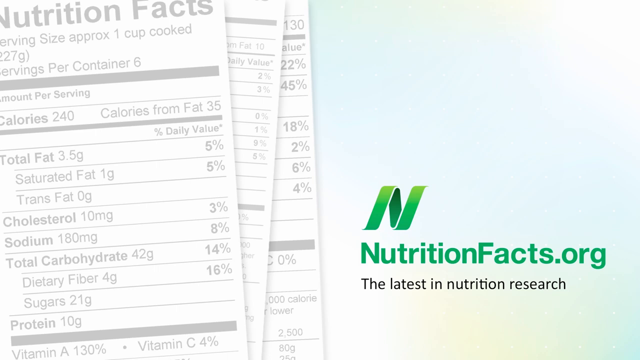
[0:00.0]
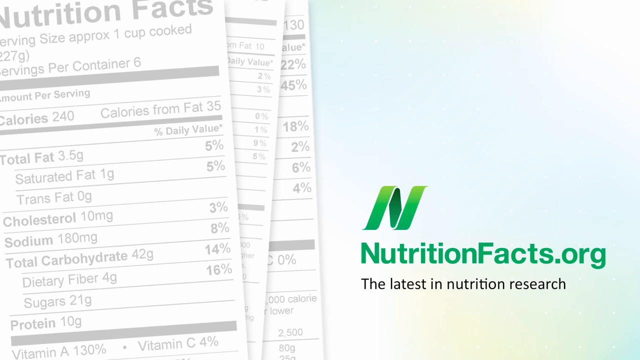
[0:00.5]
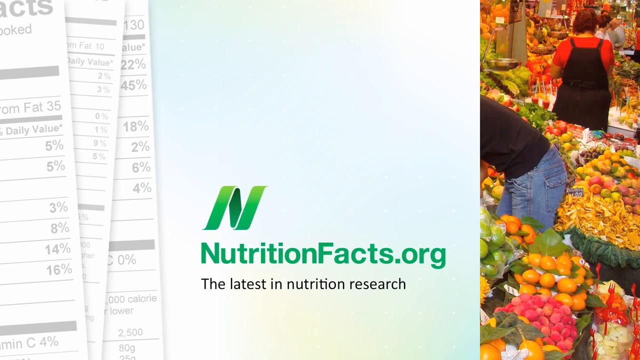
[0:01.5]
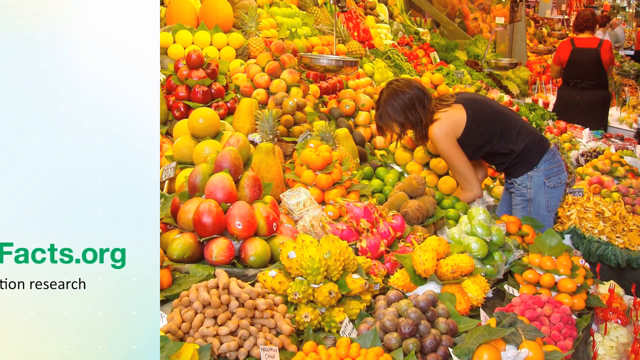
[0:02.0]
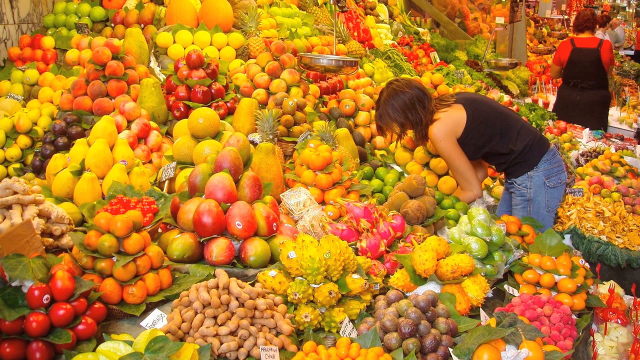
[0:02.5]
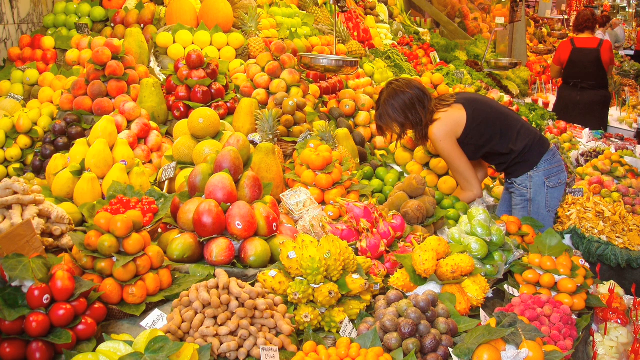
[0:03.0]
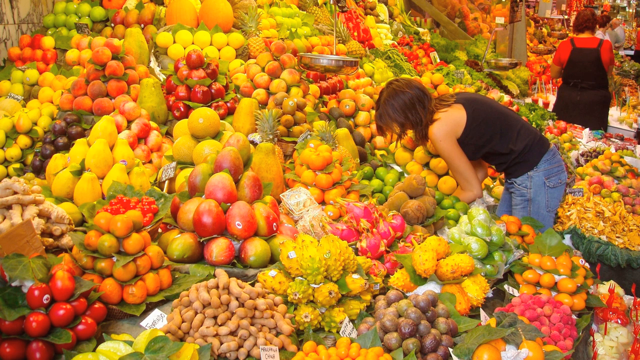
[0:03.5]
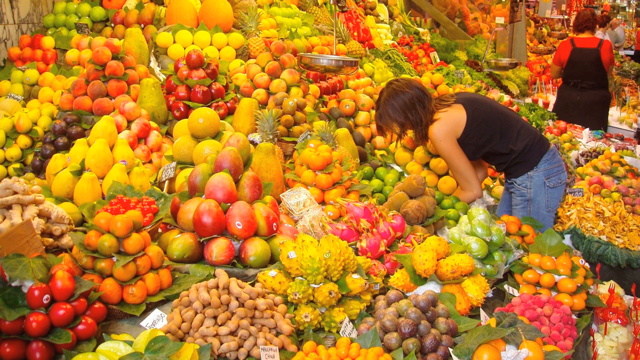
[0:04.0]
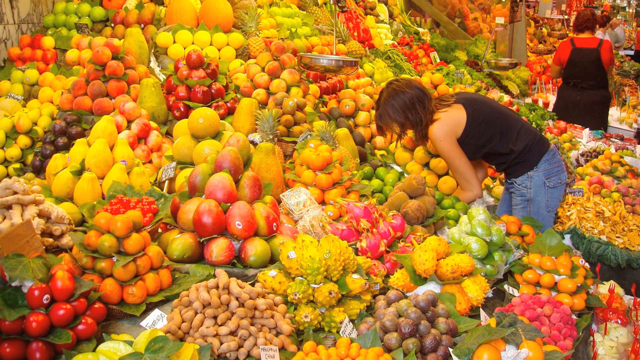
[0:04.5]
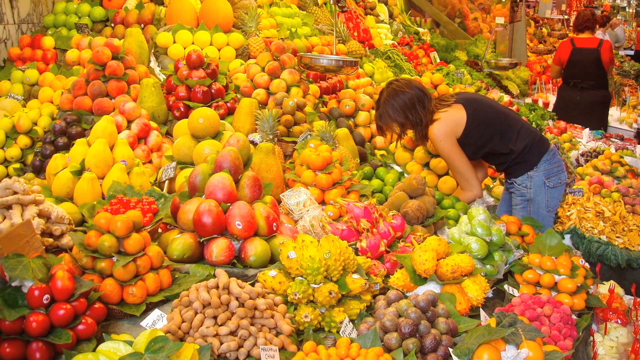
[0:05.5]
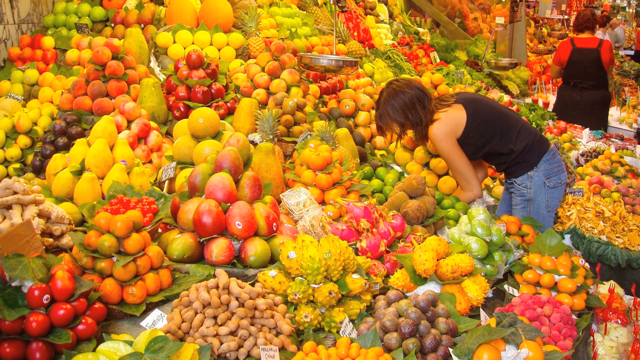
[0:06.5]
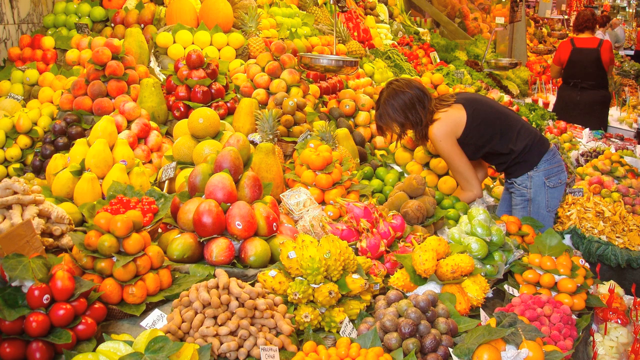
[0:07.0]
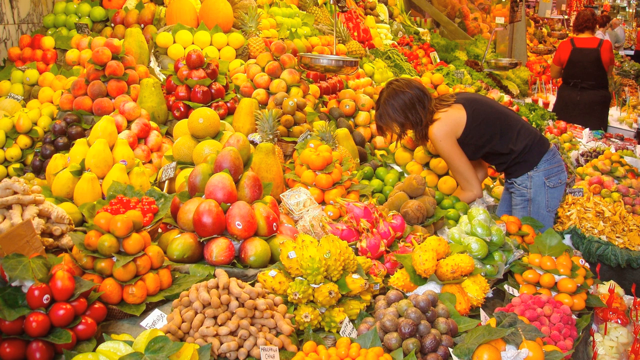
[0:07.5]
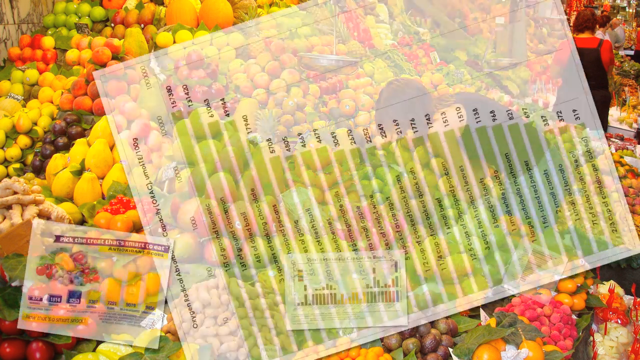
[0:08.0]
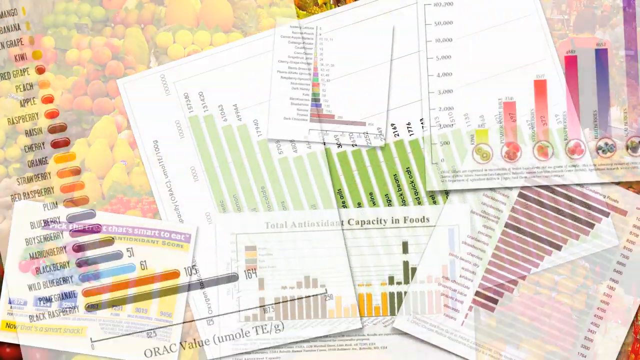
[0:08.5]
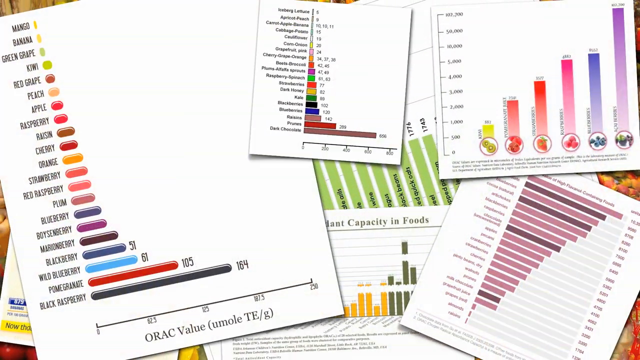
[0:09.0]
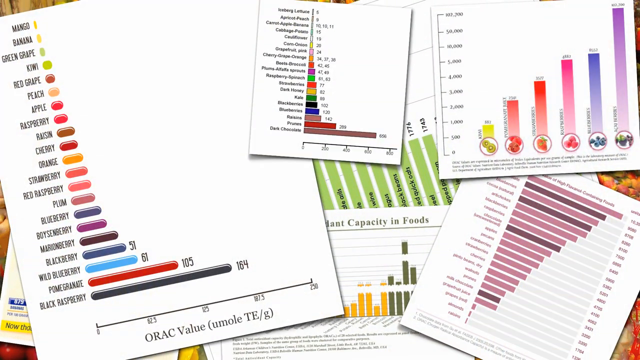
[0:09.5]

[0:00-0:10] The video presents information on nutrition facts, with the website nutritionfacts.org. A woman is in the fruit and vegetable section of a store; she appears to be holding a whole armful of round oranges and is leaning over. The oranges look like they may be about to fall on the floor, and she is trying to avoid that. Nutrition facts appear on the left side of the screen and the website information on the right-hand side. Many nutritional pamphlets appear, most of them with multicolored scales and graphs. Another woman is also shopping in the store; her back is to the camera, and she wears either overalls or a jumper with straps over her shoulders, along with a red shirt. The fruit is piled very high, stacked from about somebody's mid-thigh to almost the ceiling. It looks as if pulling one fruit would bring many of them down, which may be what happened to the girl in jeans and a black shirt.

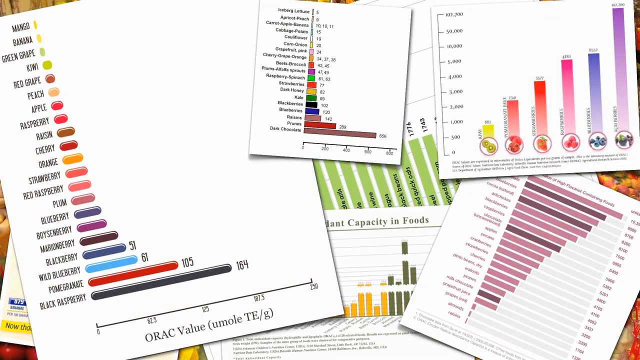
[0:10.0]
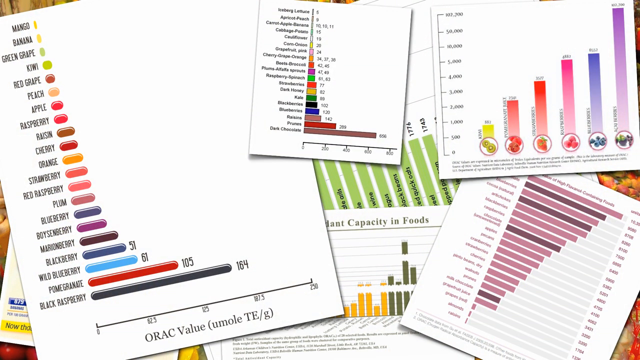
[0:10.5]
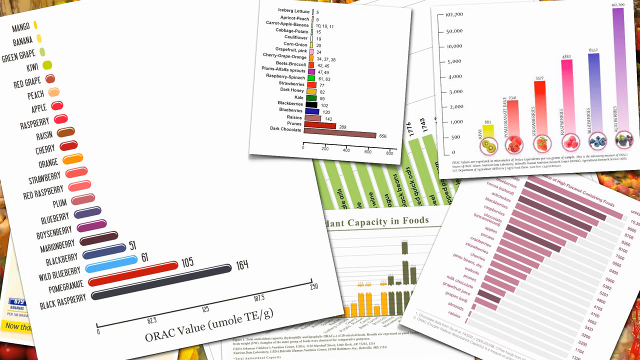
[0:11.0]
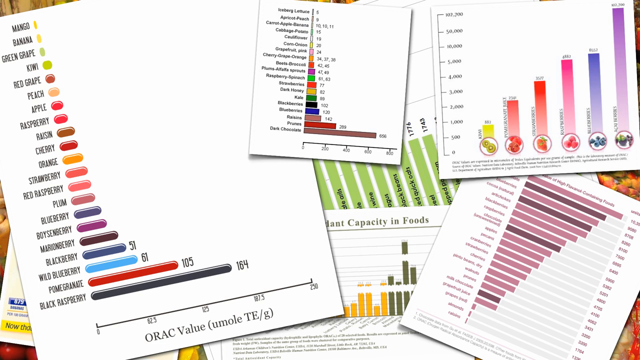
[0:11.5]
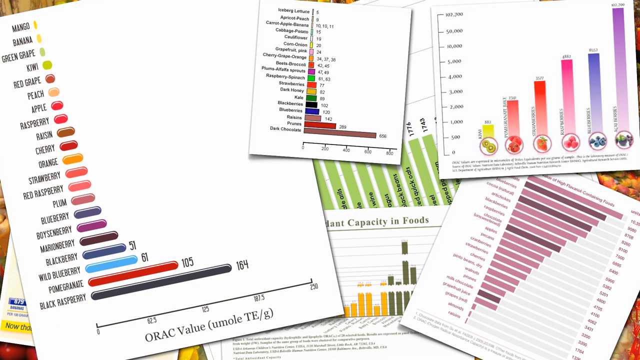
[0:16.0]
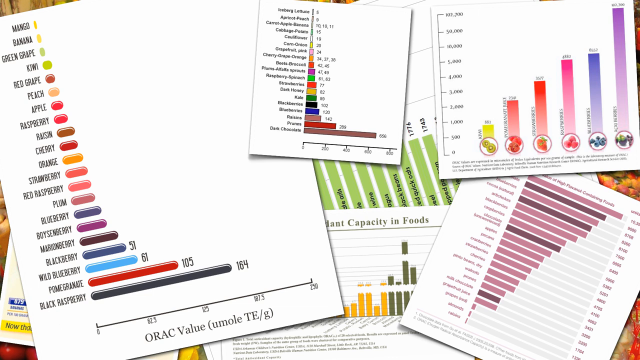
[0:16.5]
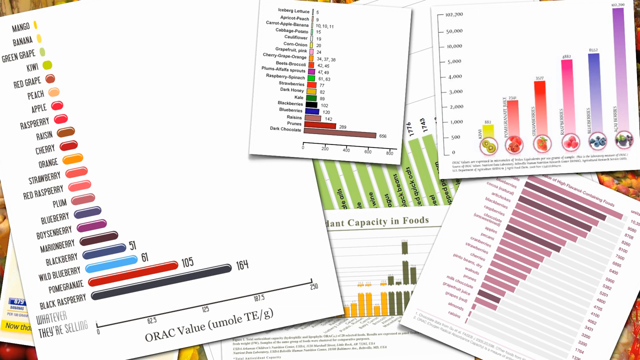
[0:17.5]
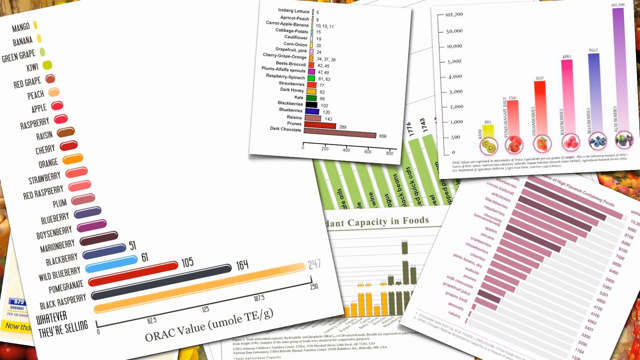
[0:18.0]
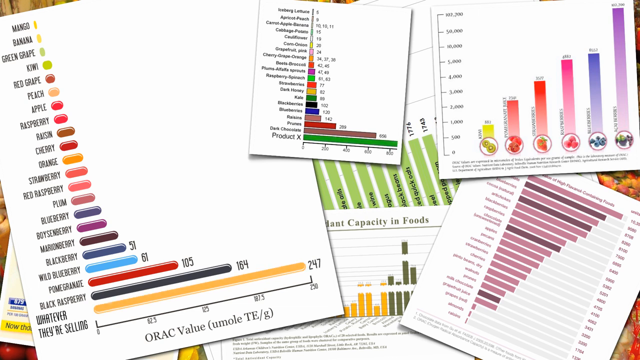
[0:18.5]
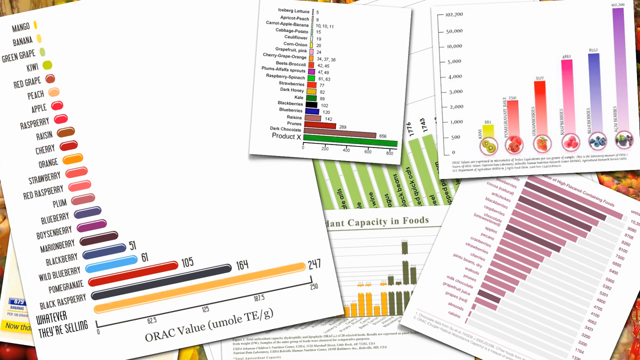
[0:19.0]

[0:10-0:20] Several pieces of paper with information about nutrition facts are shown. The one on the left lists different fruits, with a bar graph running from the smallest bar, which is yellow, to the largest at the bottom, which is black. Another graph is at the bottom of that page, and there is a smaller version of that page. A graph has vertical bars in different colors, such as pink, blue and yellow. Information underneath is less visible than the top portions. Suddenly an addition appears on the pages where the graph is: a yellow bar appears on the big one, and a green bar appears on the smaller one, which is like a duplicate of it. As quickly as they appear, the additions seem to go away, and the graphs look as they originally were.